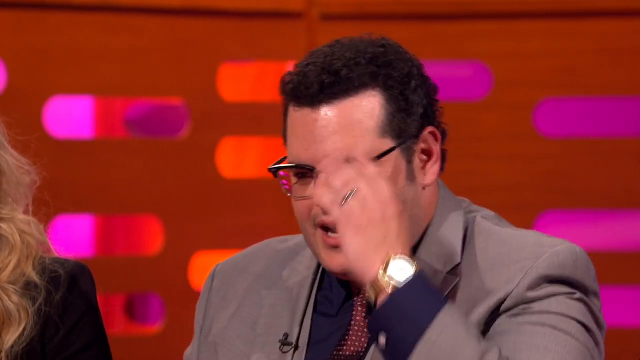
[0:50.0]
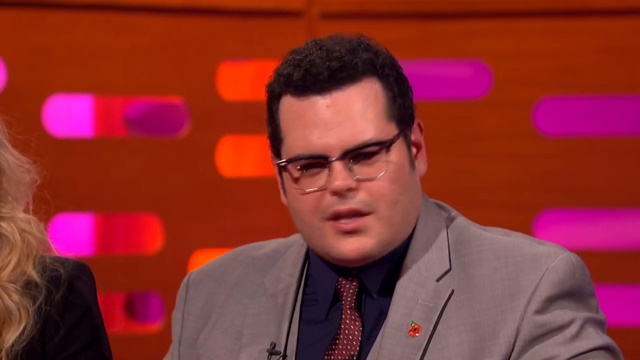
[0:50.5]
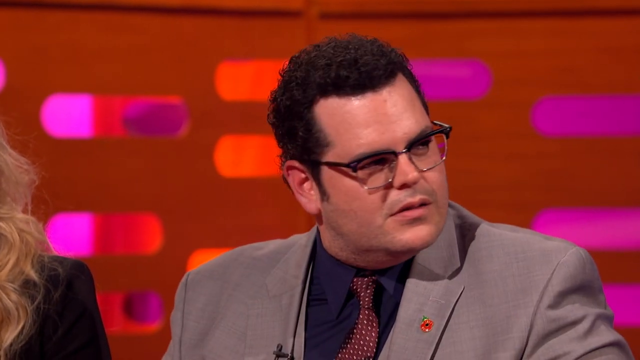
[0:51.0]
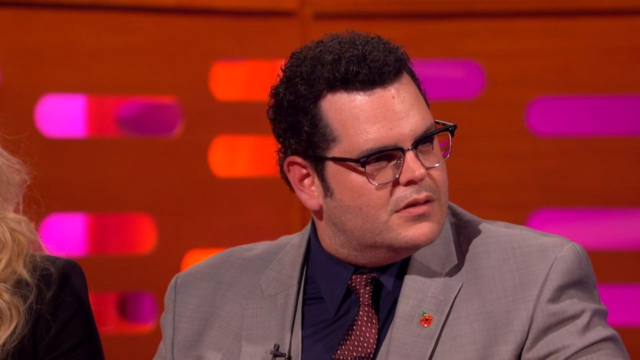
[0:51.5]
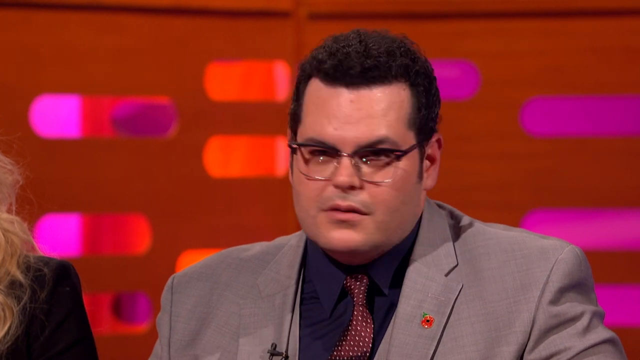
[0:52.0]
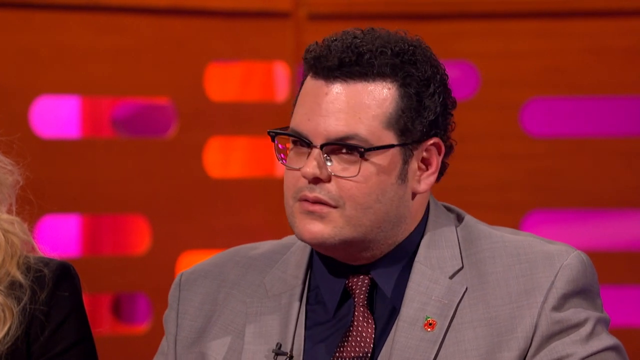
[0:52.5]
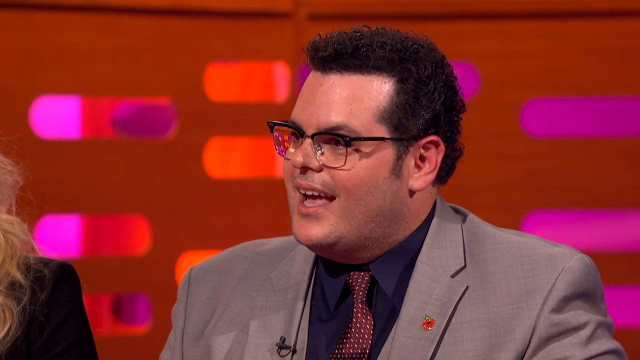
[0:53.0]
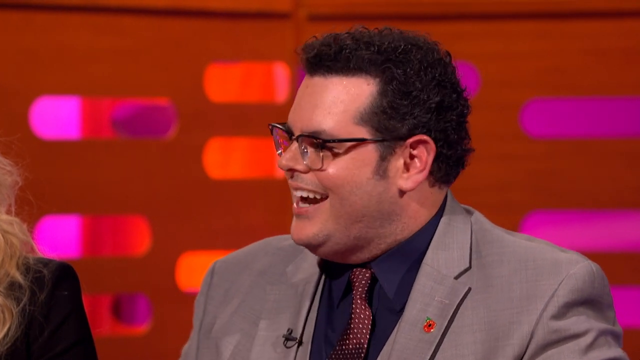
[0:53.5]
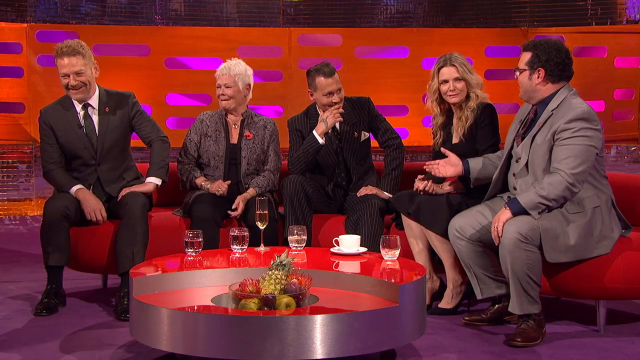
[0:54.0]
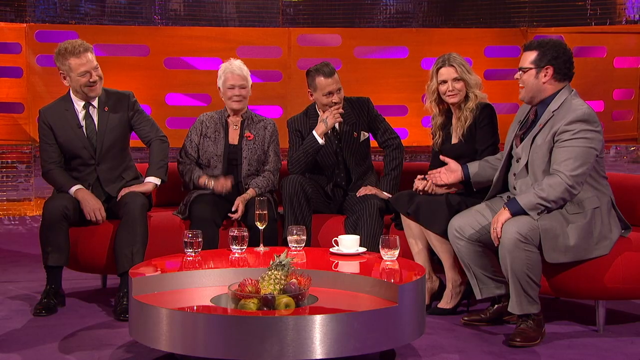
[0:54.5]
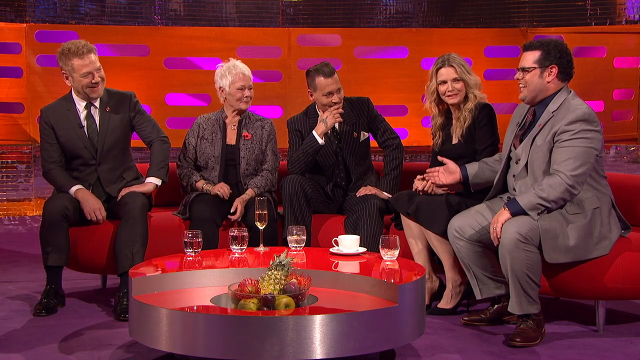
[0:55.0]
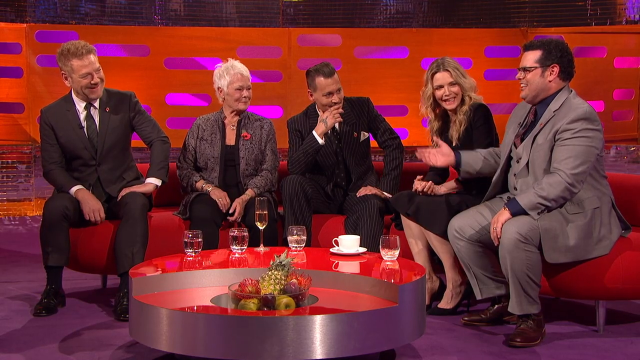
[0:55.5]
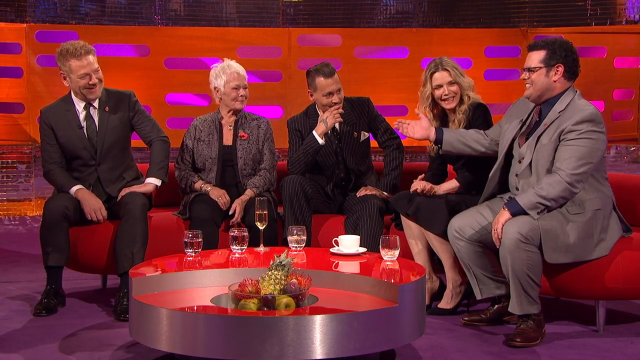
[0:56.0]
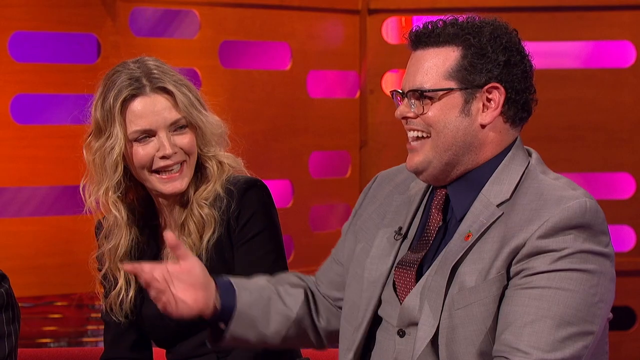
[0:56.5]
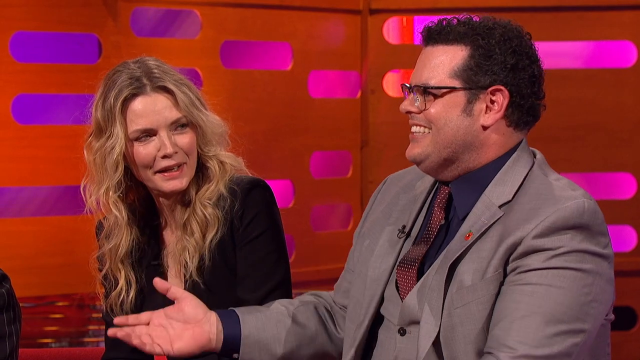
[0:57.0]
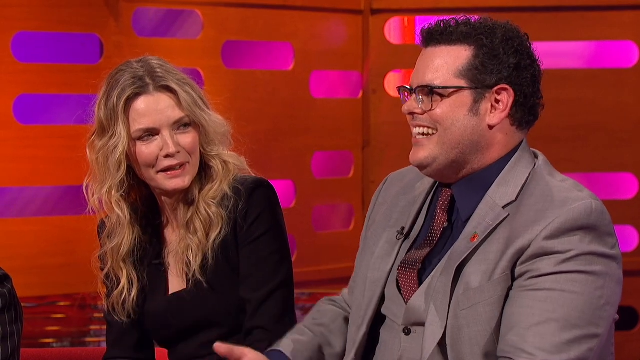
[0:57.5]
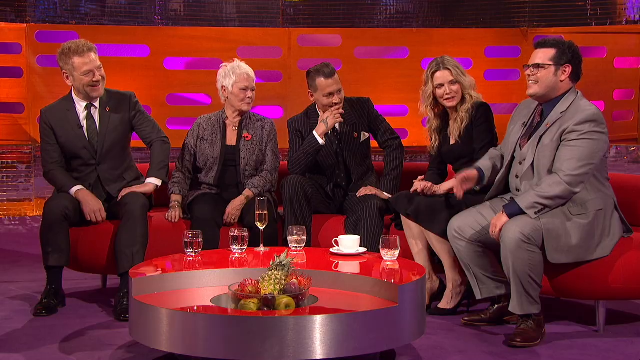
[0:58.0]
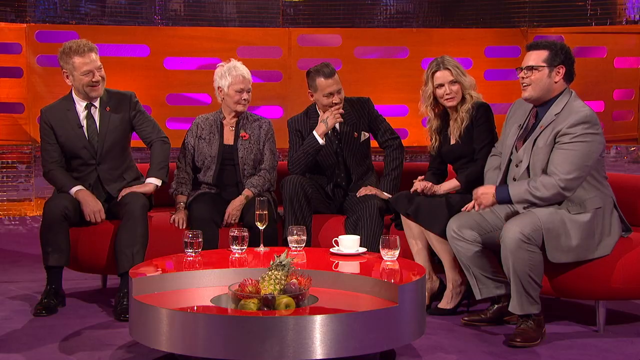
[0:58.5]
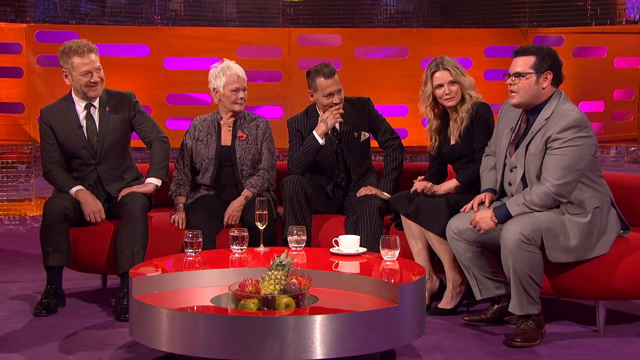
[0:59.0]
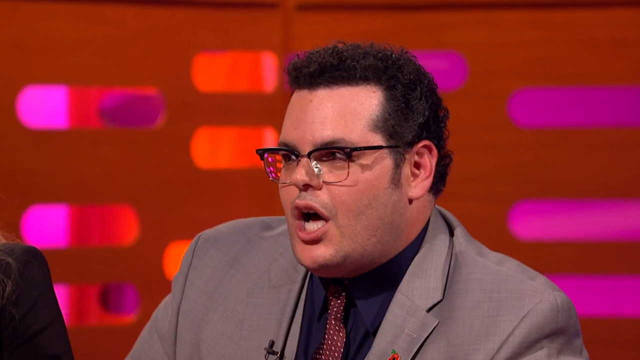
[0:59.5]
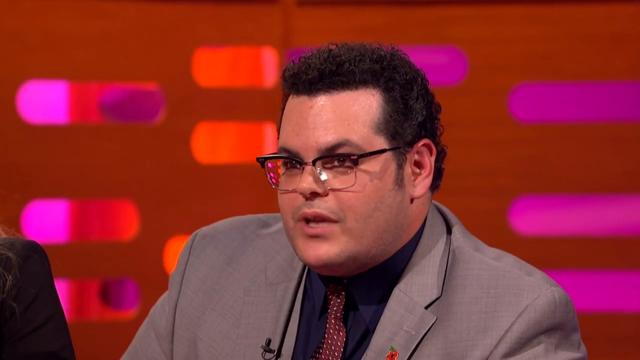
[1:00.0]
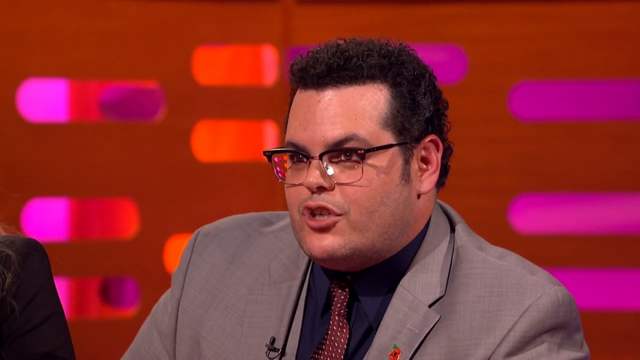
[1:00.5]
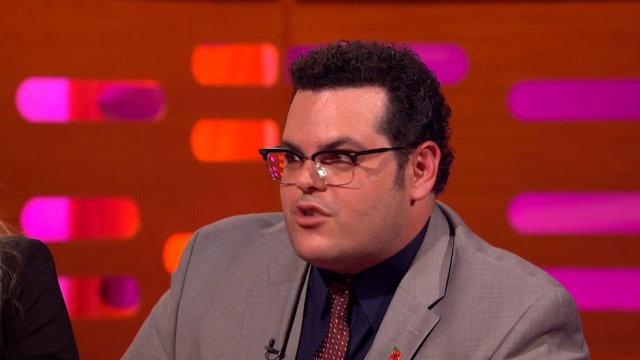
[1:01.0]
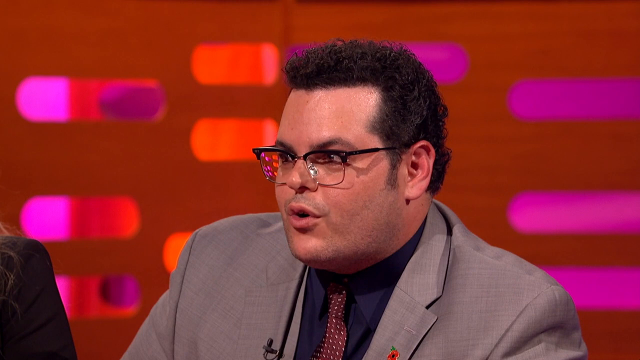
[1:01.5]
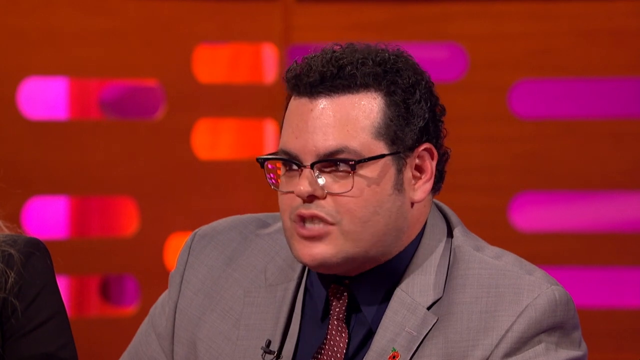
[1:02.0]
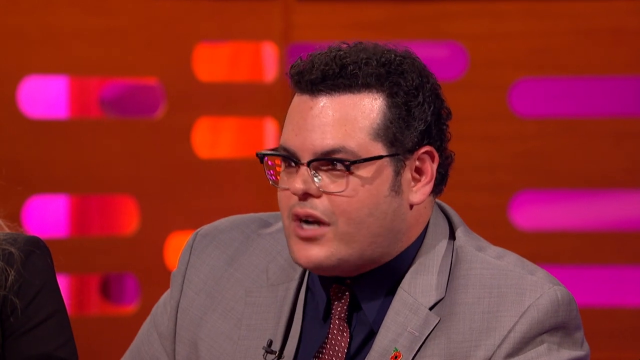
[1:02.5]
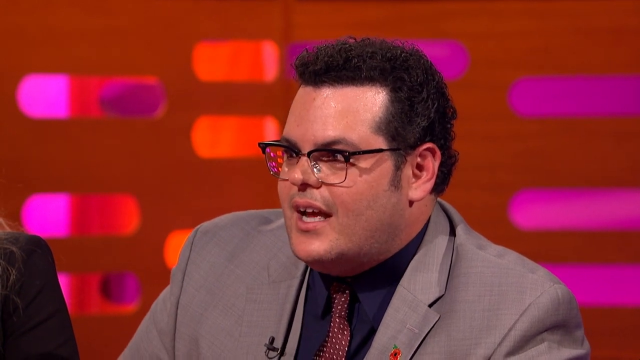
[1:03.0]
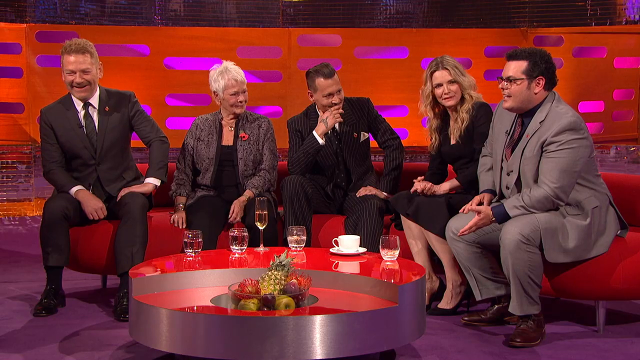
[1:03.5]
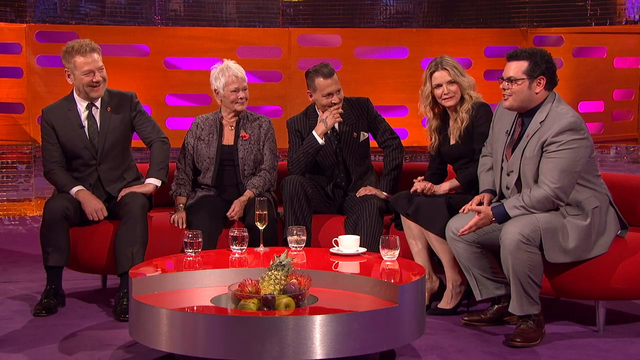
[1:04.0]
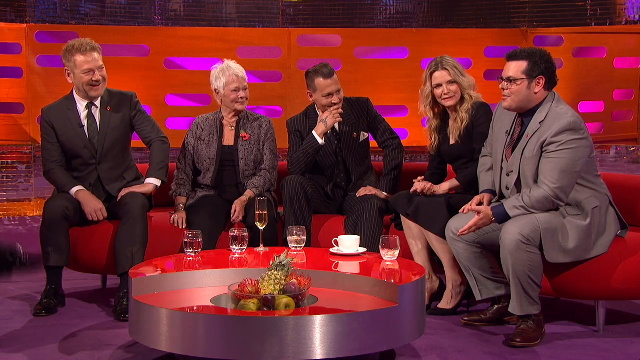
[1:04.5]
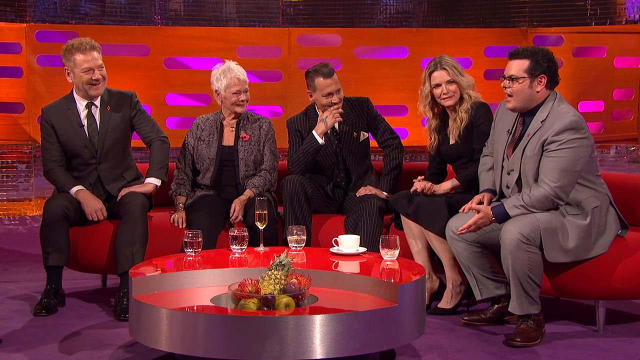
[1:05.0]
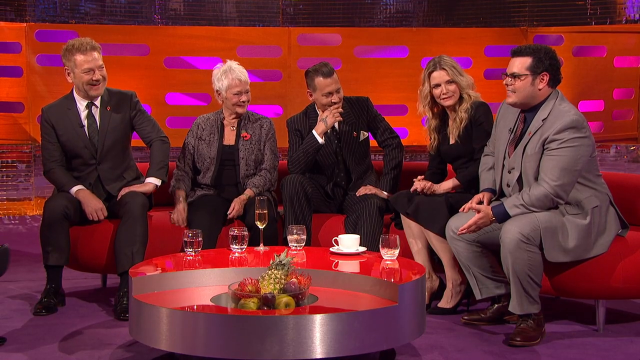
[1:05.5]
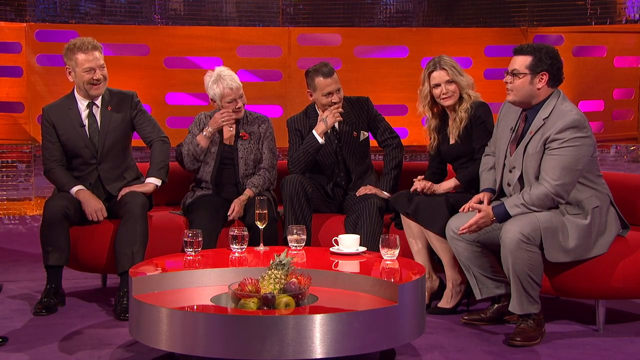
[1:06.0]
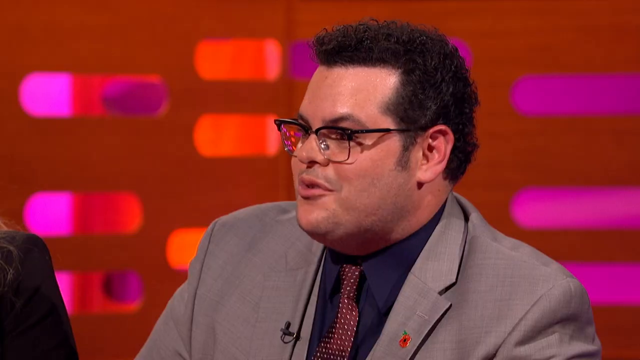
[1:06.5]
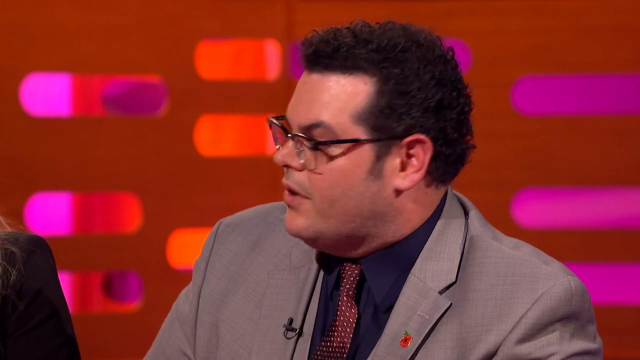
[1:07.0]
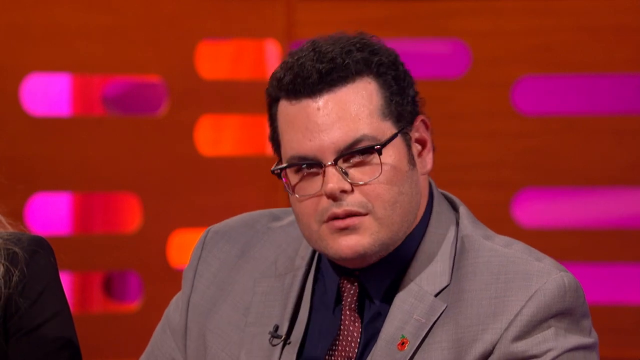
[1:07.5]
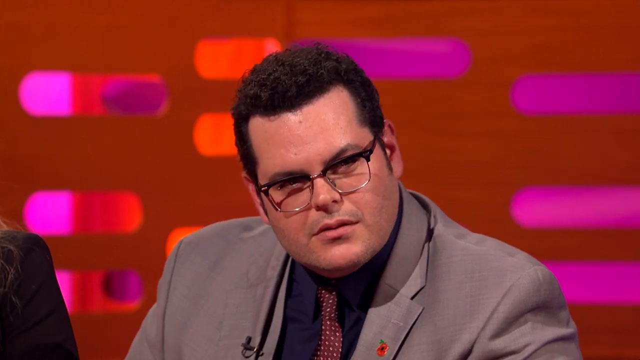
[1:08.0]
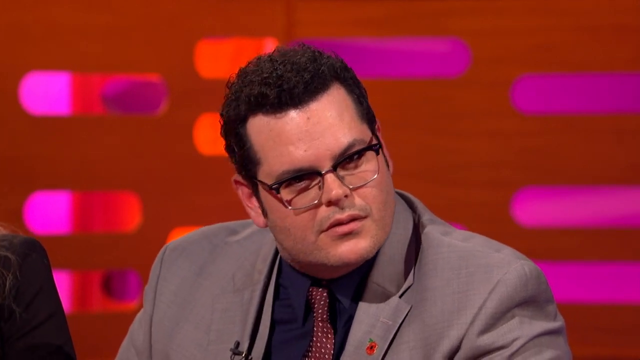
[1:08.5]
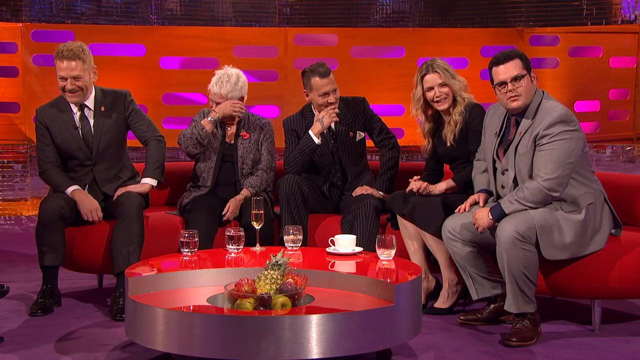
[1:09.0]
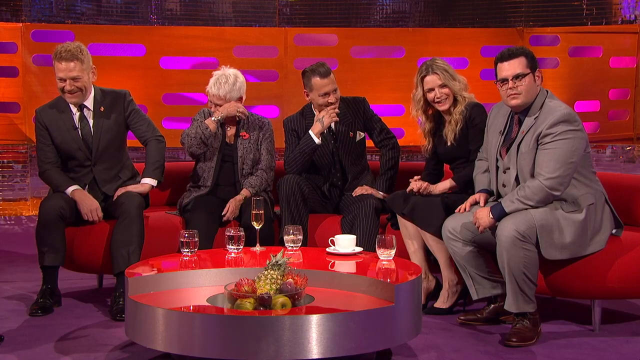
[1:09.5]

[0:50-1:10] The camera points at the man in the gray suit and glasses, who at first doesn't seem to be laughing and then does laugh. He sits explaining something to the group, his left hand on his thigh and his right hand roughly palm up. The others seem to laugh. Johnny Depp has his left hand on his left thigh and his right hand toward his mouth. The man in the black suit has his left hand on his left thigh, smiling and leaning back a little more. The man in the gray suit seems to keep explaining something, seemingly serious, gesturing with his left hand, then looks toward the others with a very serious look while the rest of the group laughs. The white-haired woman seems to be wiping tears off her face, while Johnny Depp keeps looking at the man in the gray suit with his hand on his mouth, smiling and giggling.